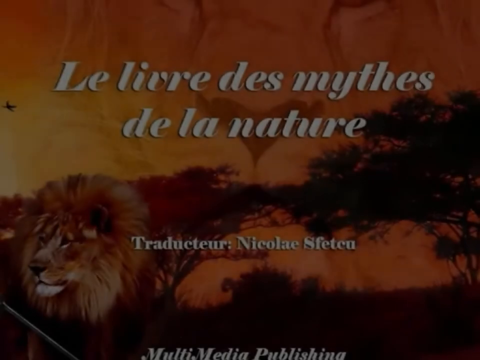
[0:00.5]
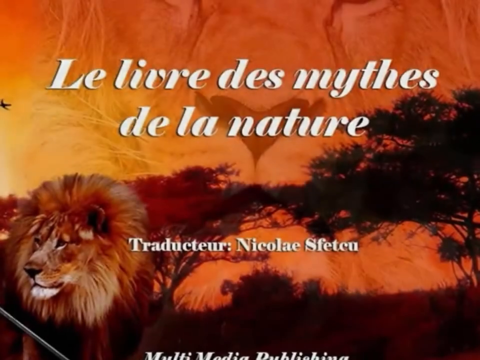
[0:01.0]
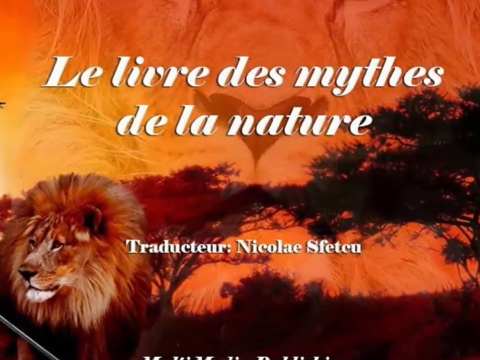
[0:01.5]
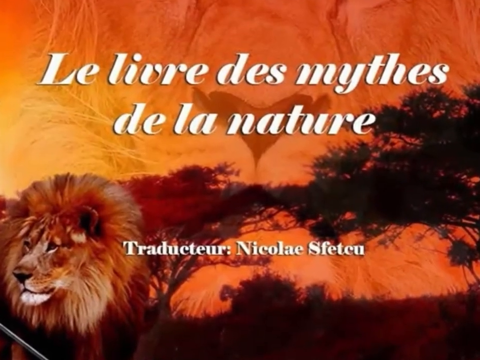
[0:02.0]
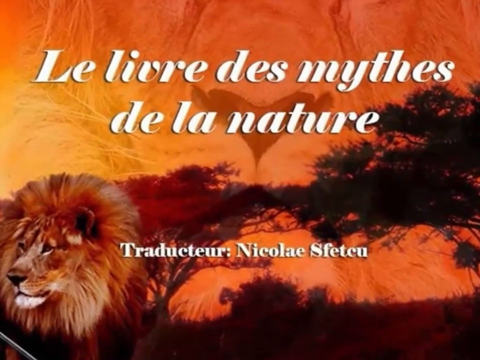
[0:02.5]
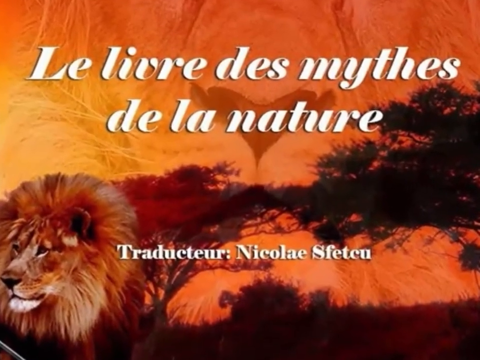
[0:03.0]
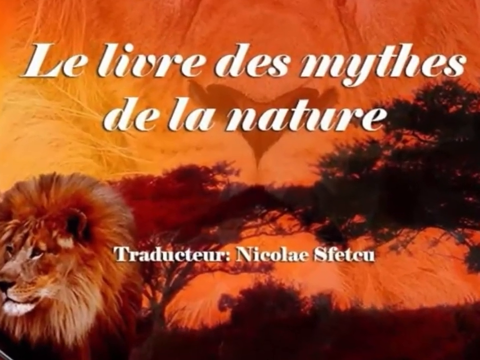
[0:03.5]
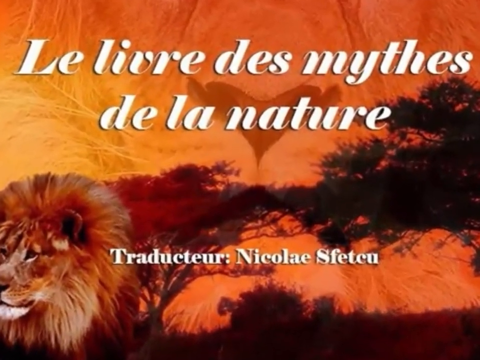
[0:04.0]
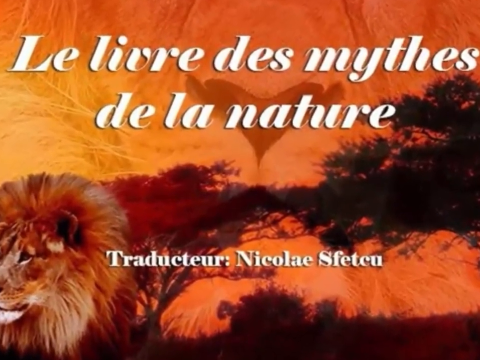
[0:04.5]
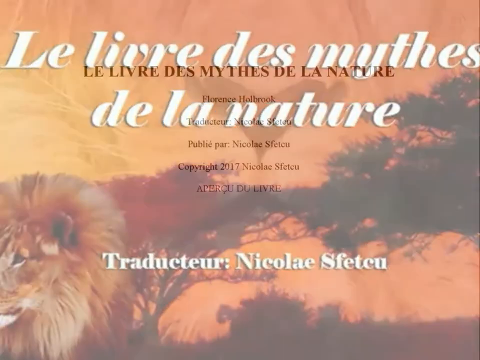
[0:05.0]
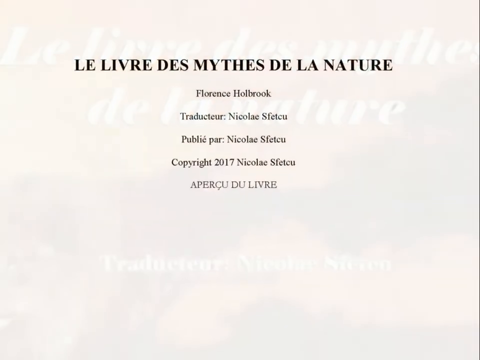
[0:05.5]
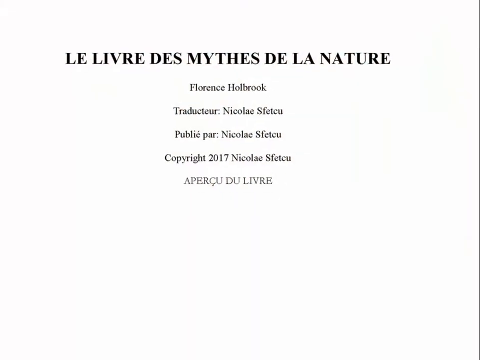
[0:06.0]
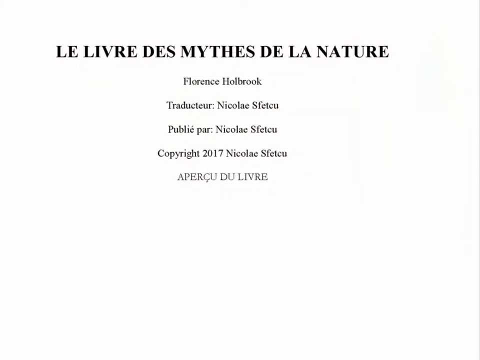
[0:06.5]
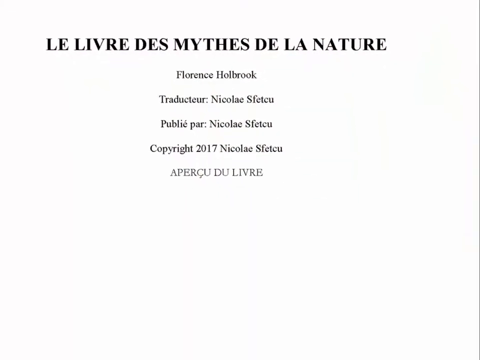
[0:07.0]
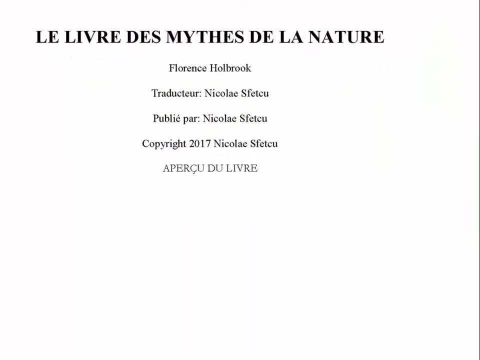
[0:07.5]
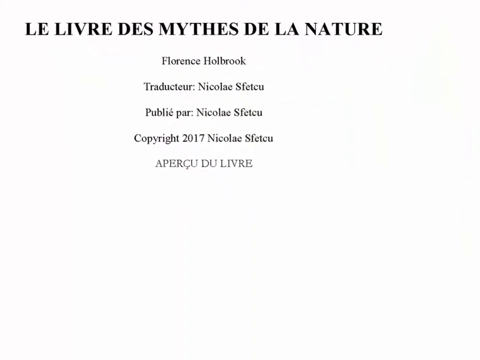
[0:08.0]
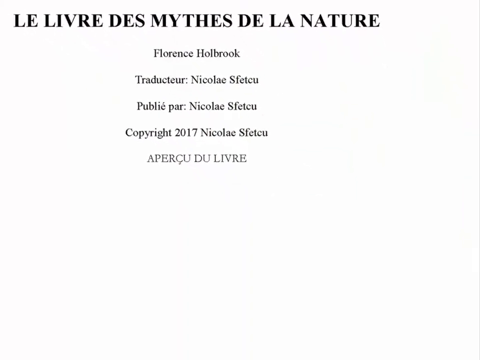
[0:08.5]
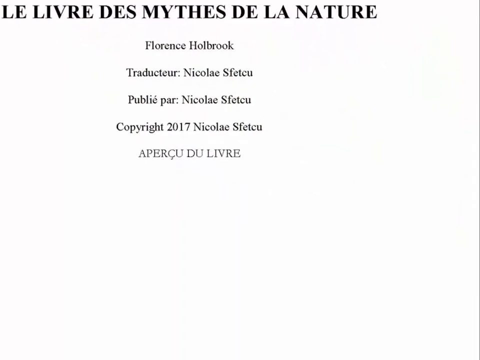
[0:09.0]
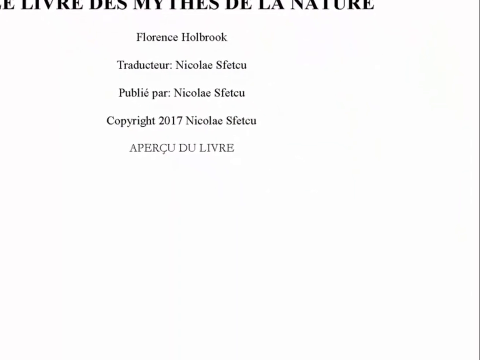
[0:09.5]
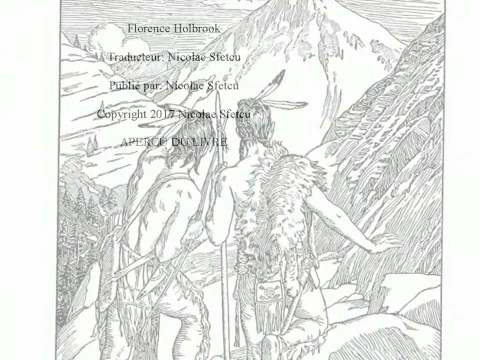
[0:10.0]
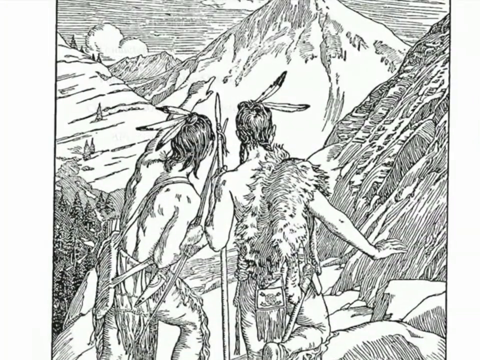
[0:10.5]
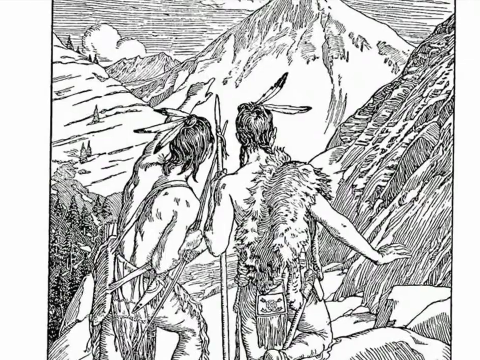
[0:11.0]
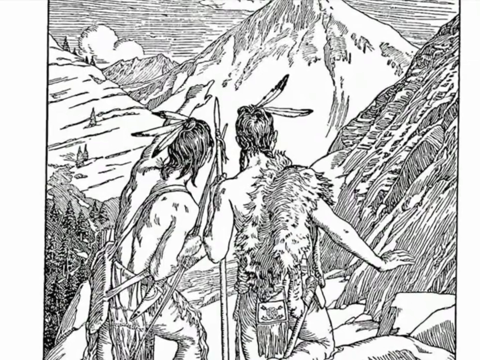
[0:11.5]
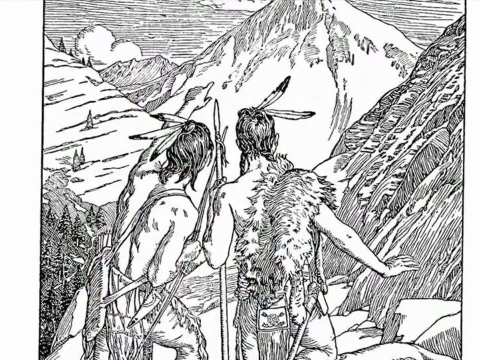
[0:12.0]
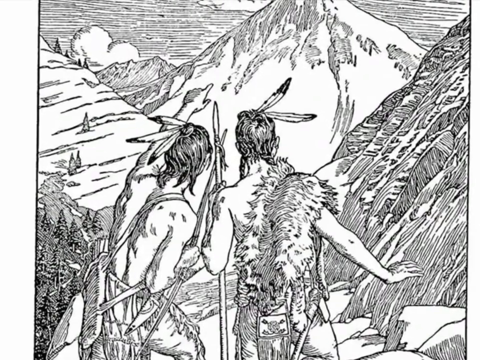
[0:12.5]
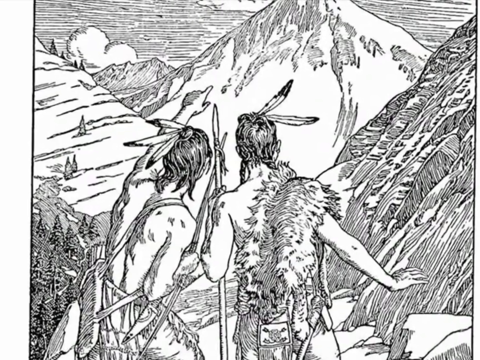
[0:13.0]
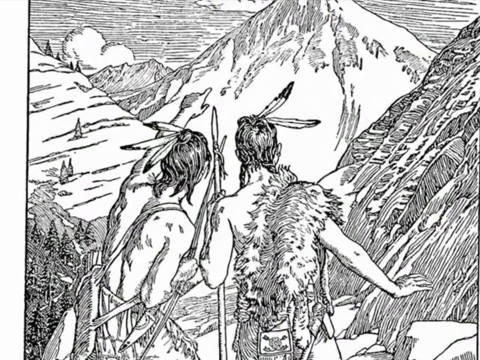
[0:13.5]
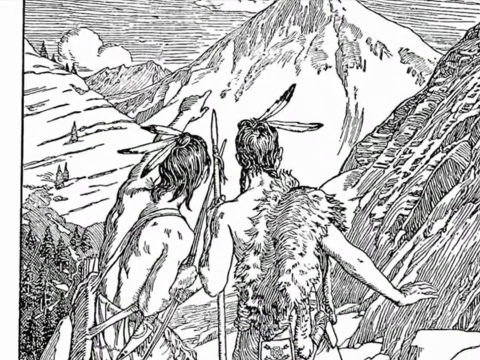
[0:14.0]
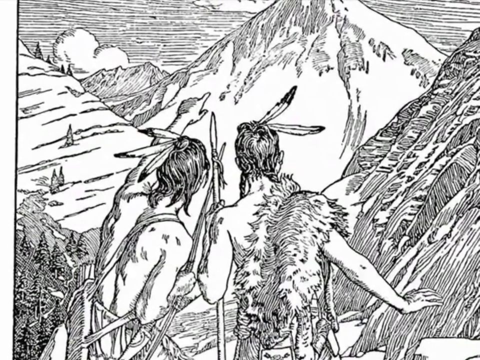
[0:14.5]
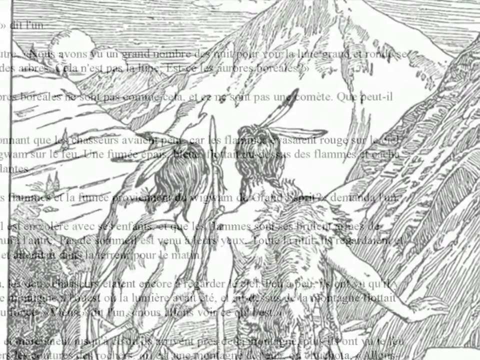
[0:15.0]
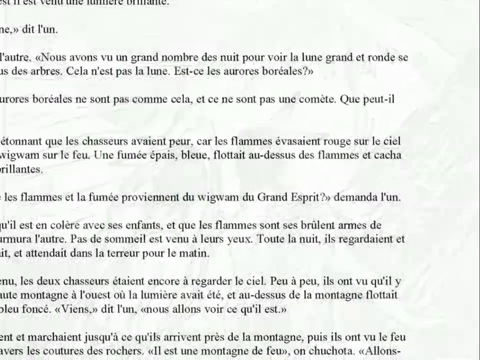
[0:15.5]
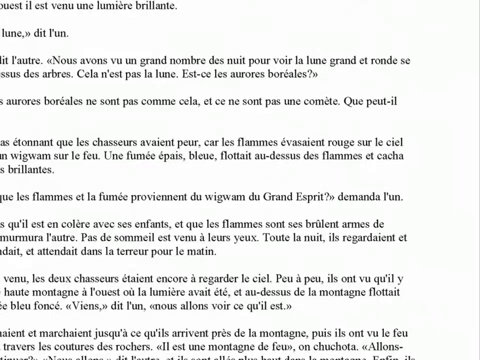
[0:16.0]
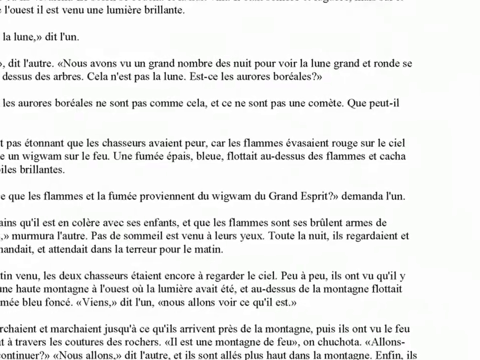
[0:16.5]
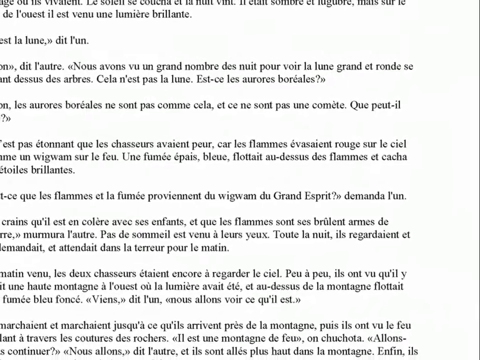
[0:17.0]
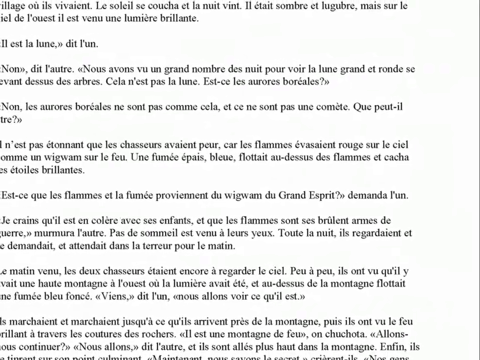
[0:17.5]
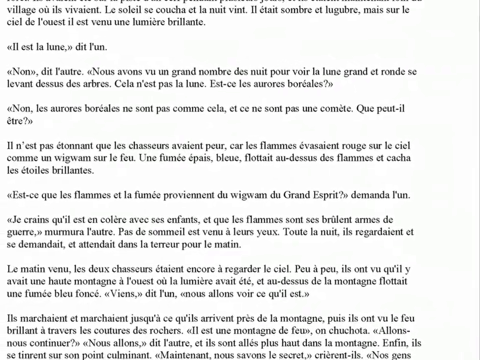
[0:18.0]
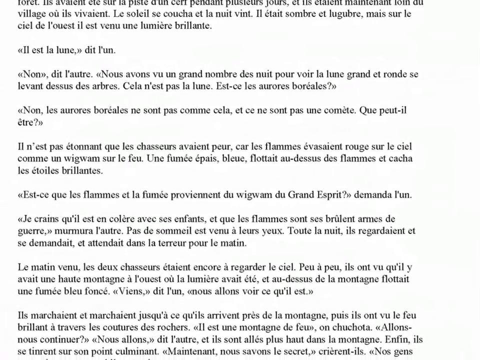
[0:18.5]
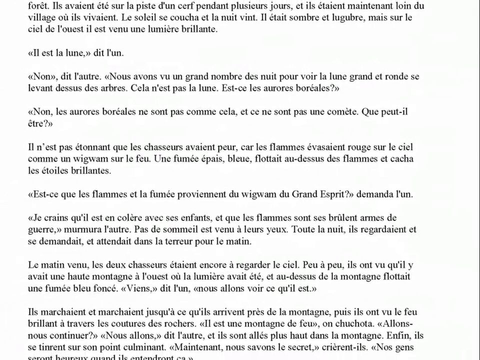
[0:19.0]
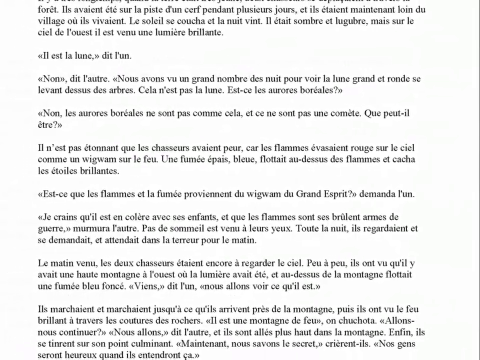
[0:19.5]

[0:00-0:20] The video opens on an image of the savannah, heavily filtered with warm colors. A lion's head is in the bottom left of the screen, and trees and a sunset sky are visible in the background. After a transition, text in a foreign language appears that seems to be the title of the presentation and the people involved in making it. This text moves toward the top left of the screen. Another transition reveals a pencil drawing of what appear to be two native people facing away from the camera. The one on the left points toward a mountain in the background, and the one on the right holds a spear. Both wear fur clothes and have feathers in their hair. The camera zooms in on the center of the image, appearing to move forward. After another transition, a page full of text, still in a foreign language, appears, and the view zooms out on it.